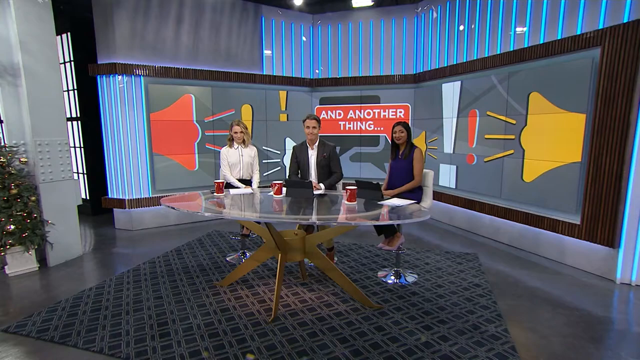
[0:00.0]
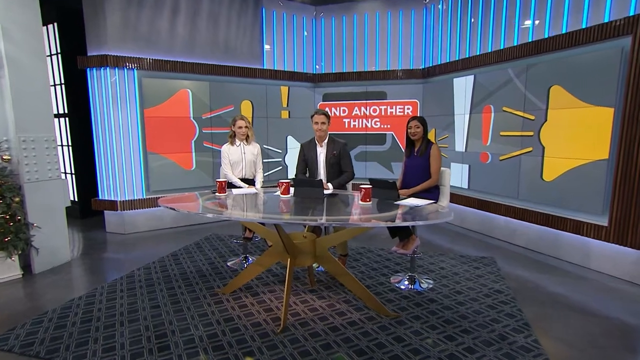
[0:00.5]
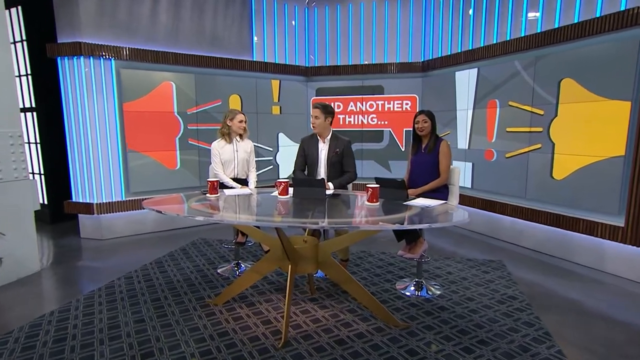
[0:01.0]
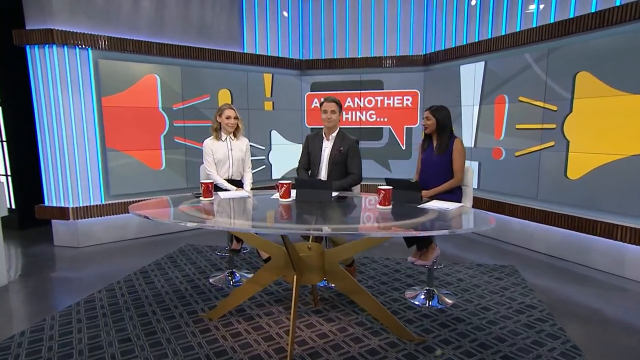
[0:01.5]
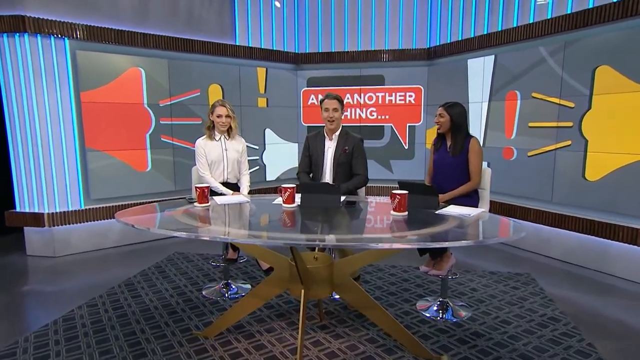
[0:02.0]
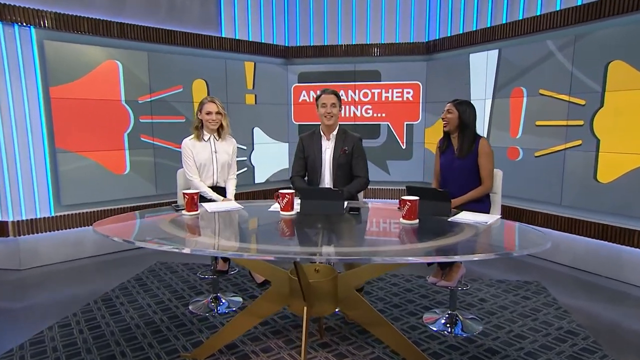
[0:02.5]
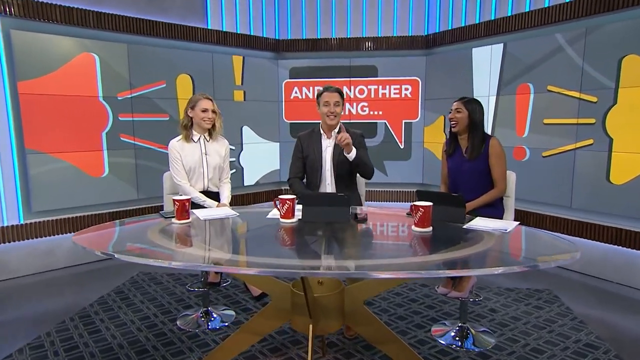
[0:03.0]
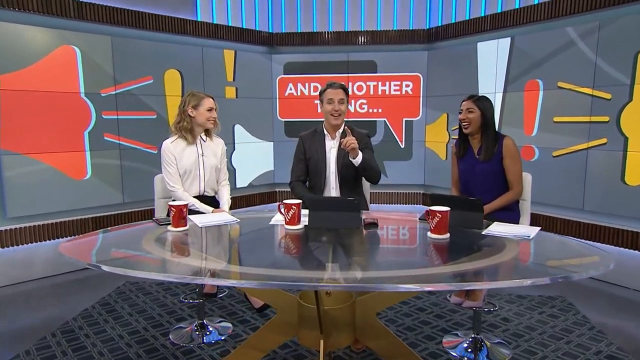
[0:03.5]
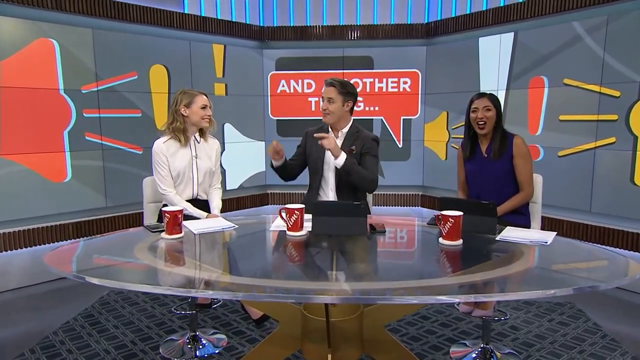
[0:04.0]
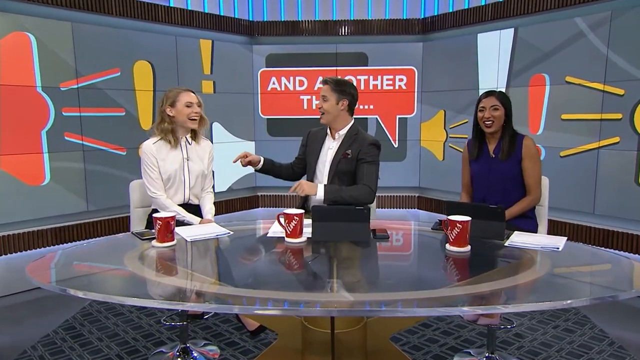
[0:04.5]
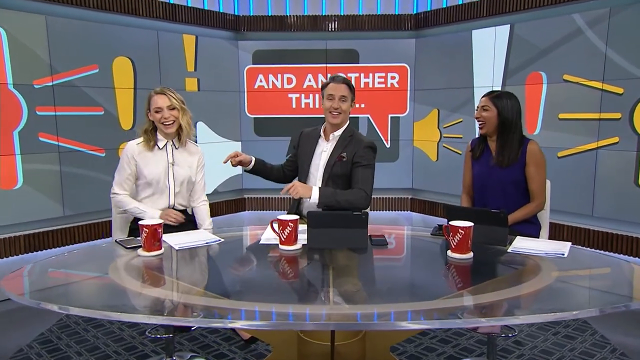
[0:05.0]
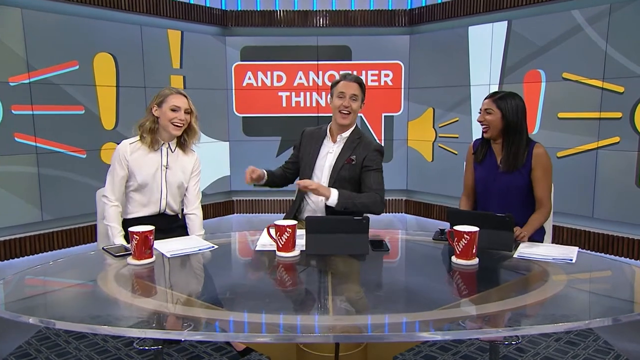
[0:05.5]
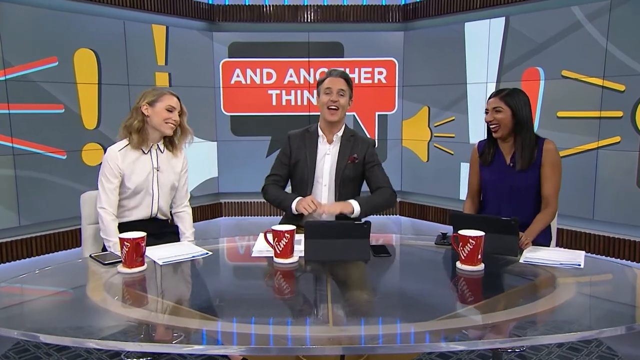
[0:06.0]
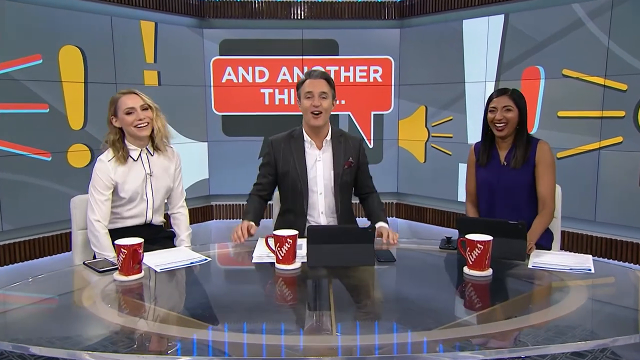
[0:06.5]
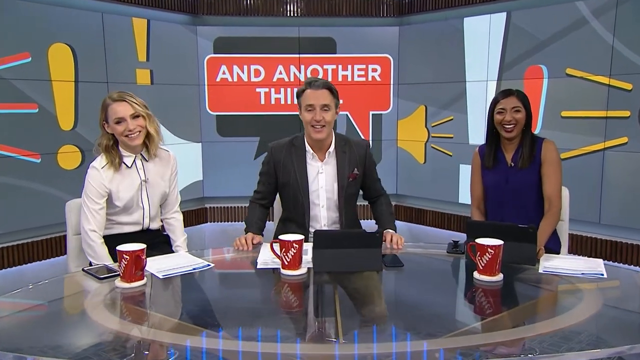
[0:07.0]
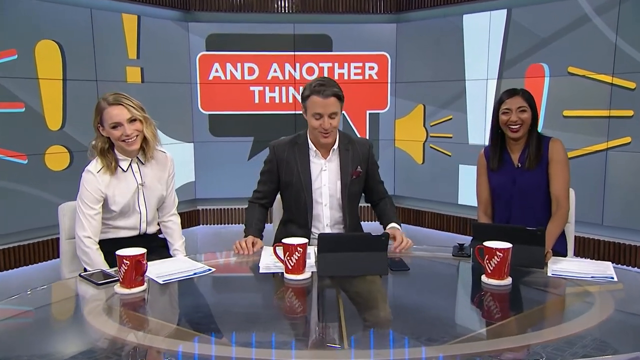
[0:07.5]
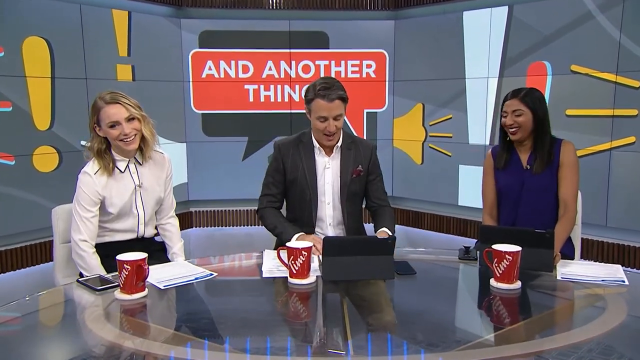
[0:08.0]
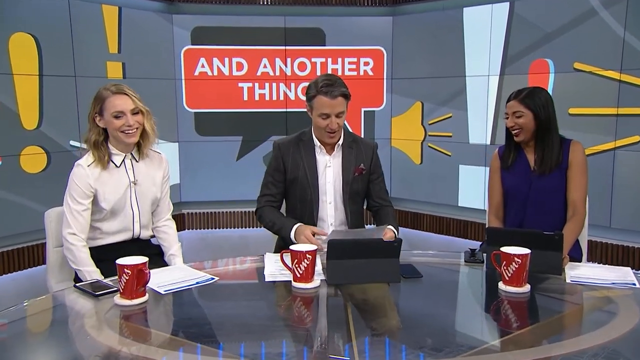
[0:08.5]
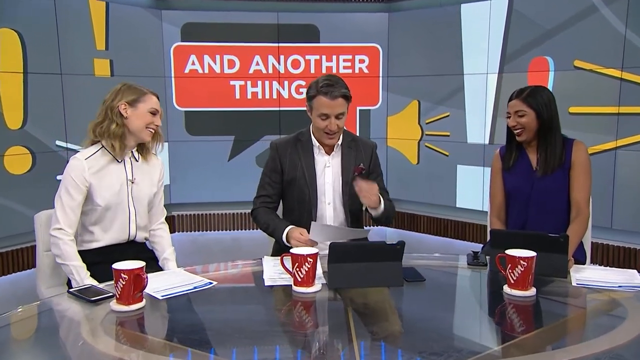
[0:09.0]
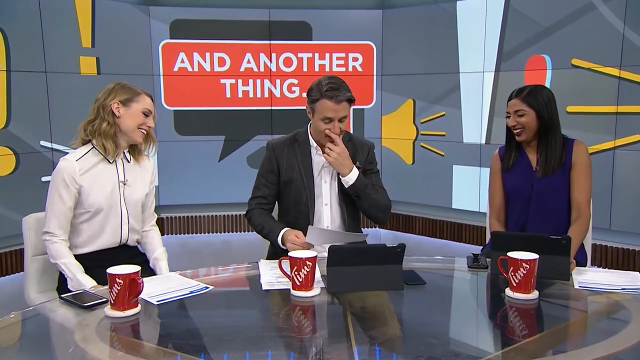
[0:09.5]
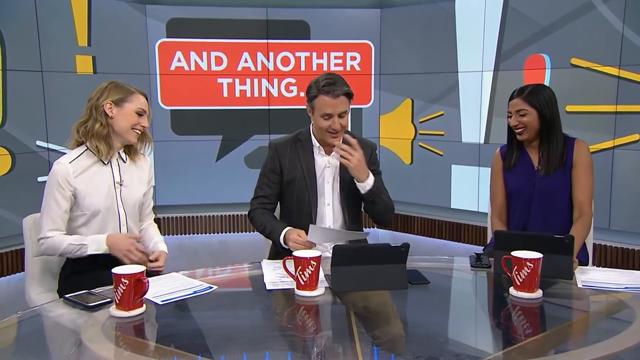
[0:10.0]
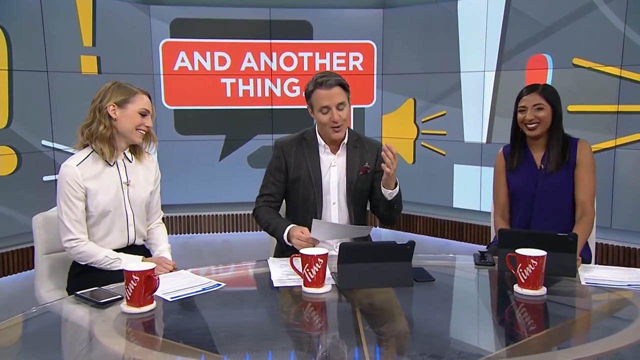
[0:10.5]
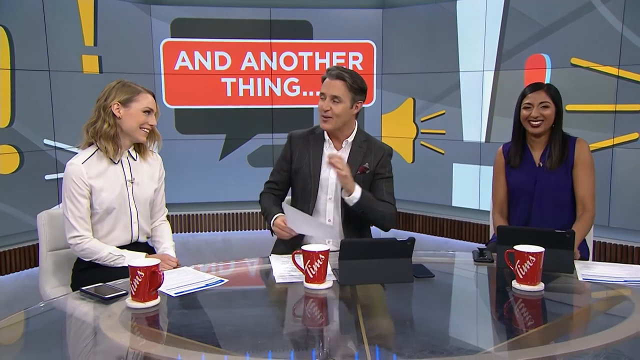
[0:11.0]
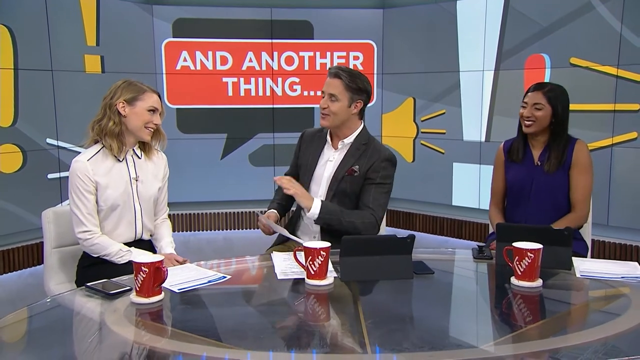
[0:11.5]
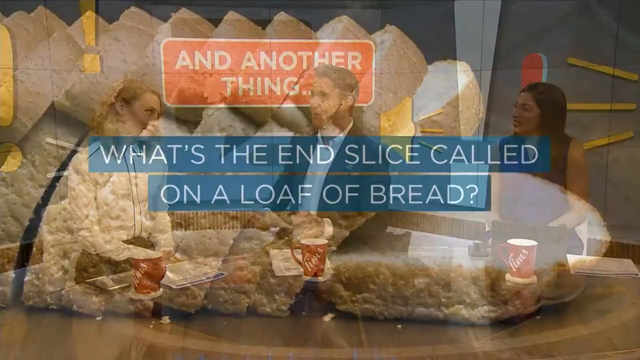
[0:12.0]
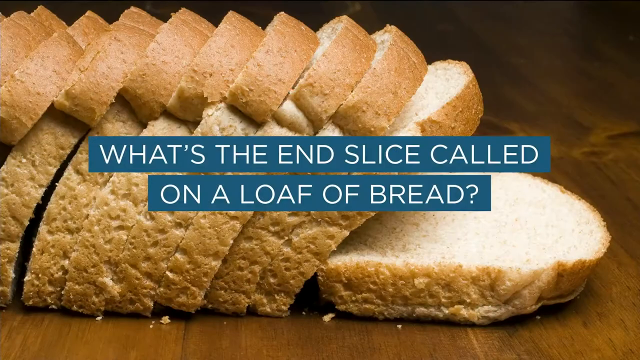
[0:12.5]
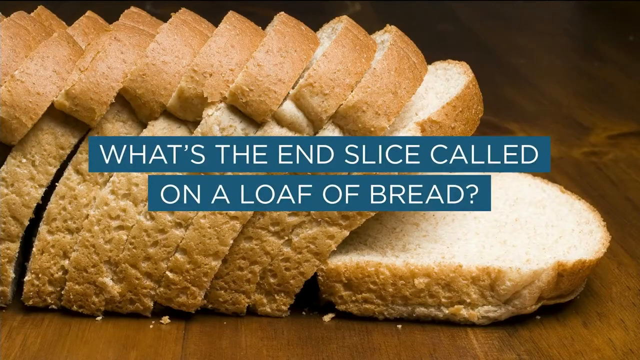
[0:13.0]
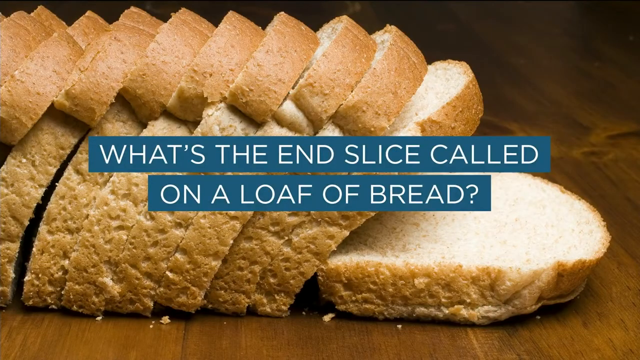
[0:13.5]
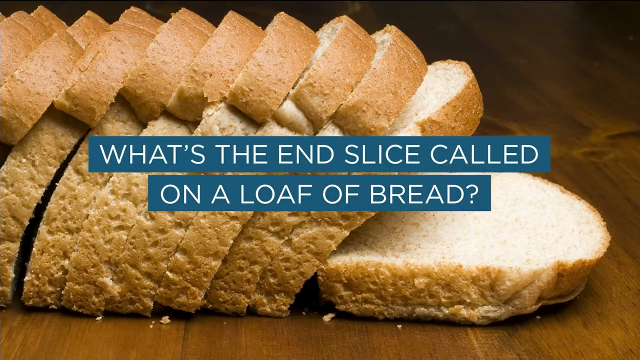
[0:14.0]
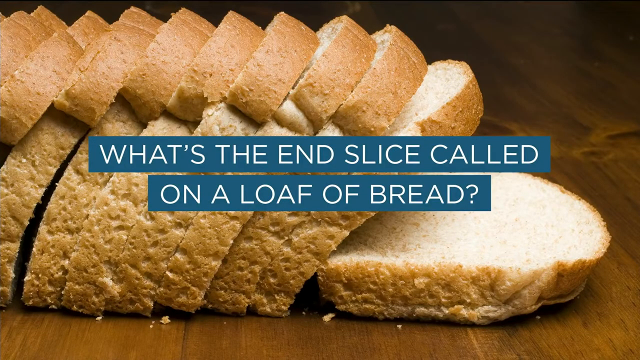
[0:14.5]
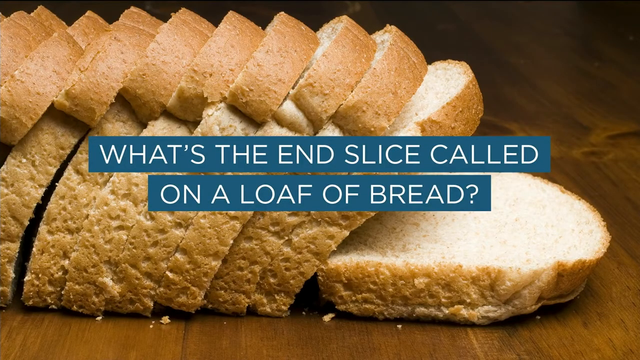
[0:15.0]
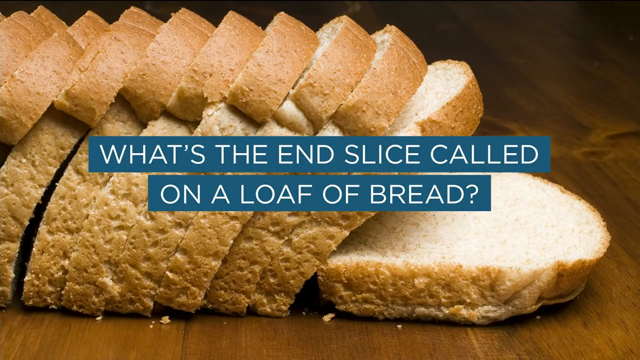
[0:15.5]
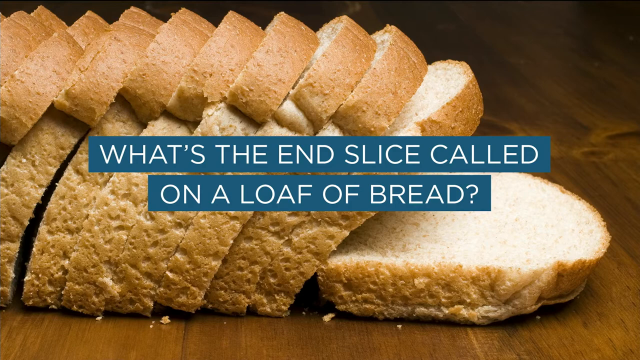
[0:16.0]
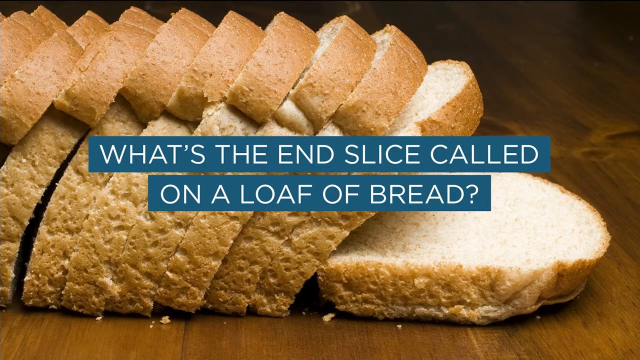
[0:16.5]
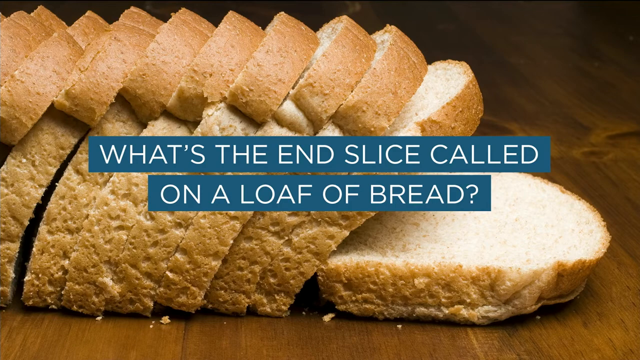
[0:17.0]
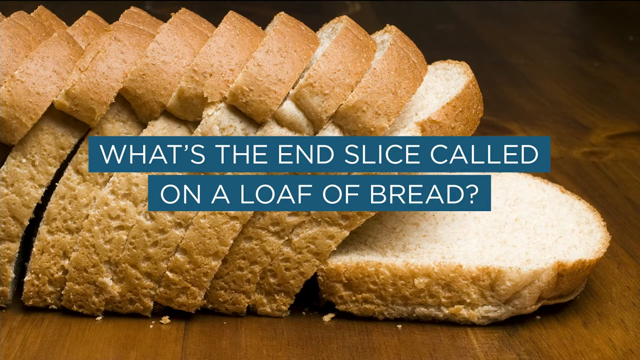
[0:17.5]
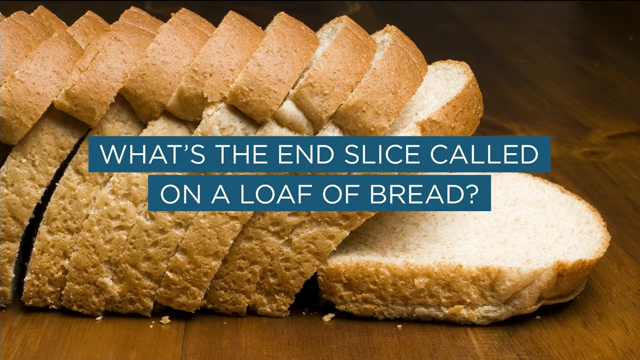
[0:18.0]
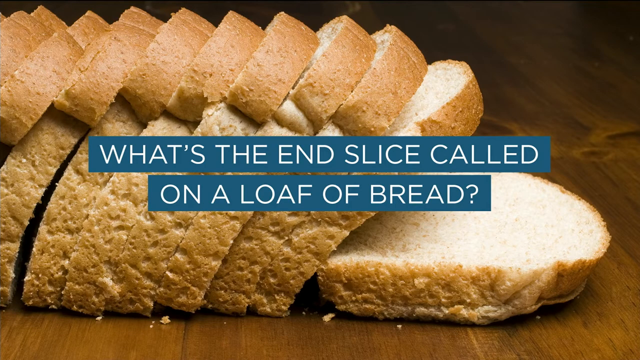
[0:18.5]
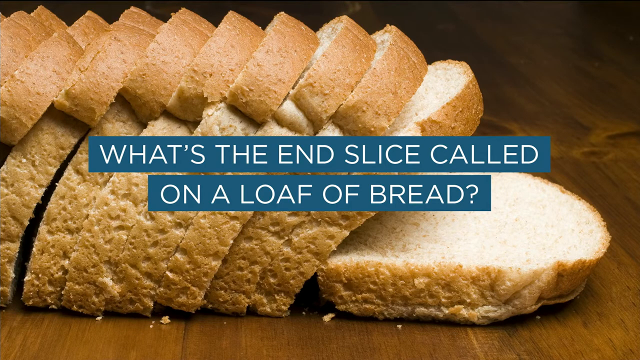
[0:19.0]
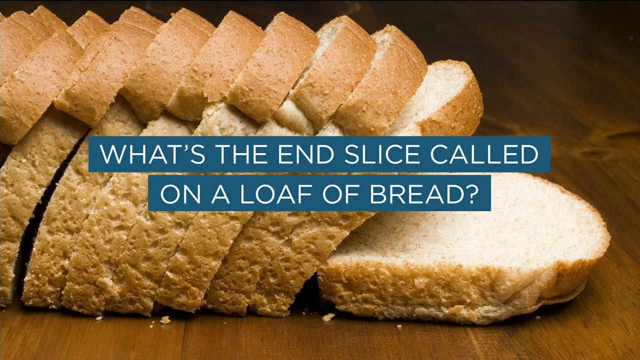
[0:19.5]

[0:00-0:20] Three people are in the middle of the frame. A man looks right at the camera. The woman on the right appears to be wearing a short-sleeve or sleeveless blue dress. They are sitting in what seem to be white swivel chairs. The man in the middle, who looks at the camera, has grayish, shorter hair parted to his left and wears a white dress shirt and a black suit. Another woman, also looking at the camera, wears a white long-sleeve shirt with a black dress. Each of them has a red coffee mug on a white coaster. Behind them are three pictures, including sound icons: one on the left is red and one on the right is orange, with lines showing sound coming out of a speaker. There is also a red box with the words "another thing". They sit at a round glass table with what looks like a gold, lace-like ornamental design underneath that comes up in four places and slants outward. The camera zooms in a little as the host holds a finger up, pointing to the woman on the right. She laughs, and both women laugh. Text apparently reads "Tim's Horton". The woman turns, and the video shows a loaf of bread, all sliced, on the table.